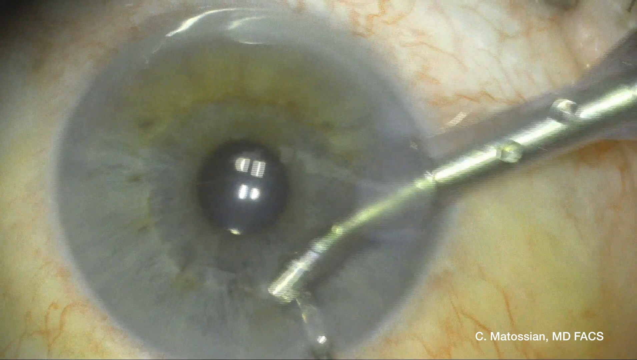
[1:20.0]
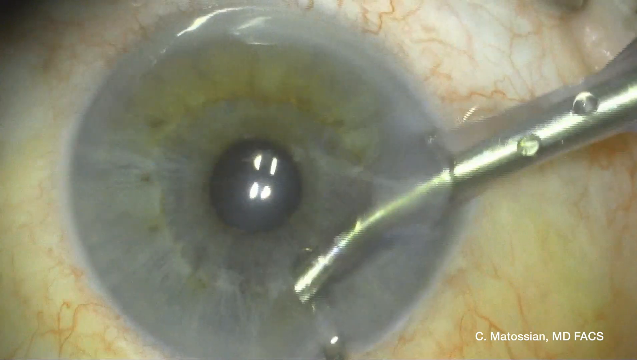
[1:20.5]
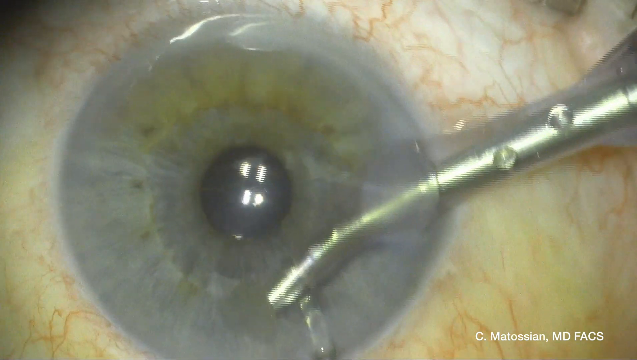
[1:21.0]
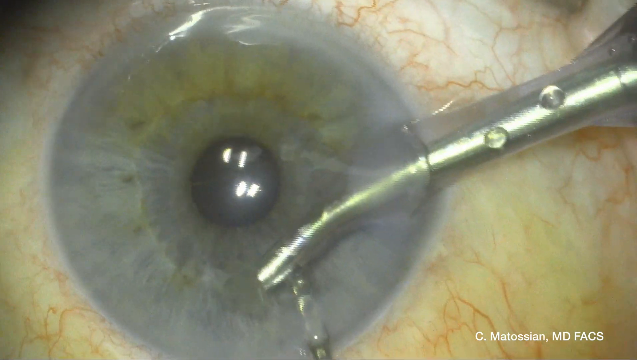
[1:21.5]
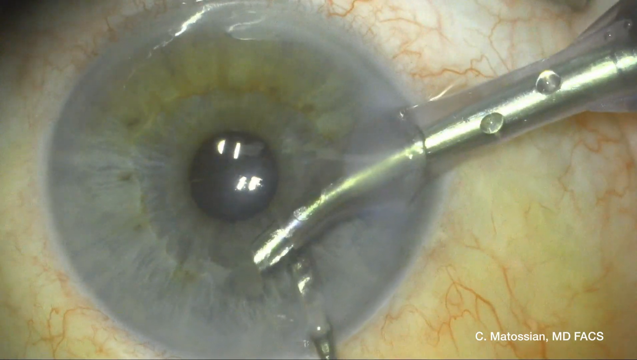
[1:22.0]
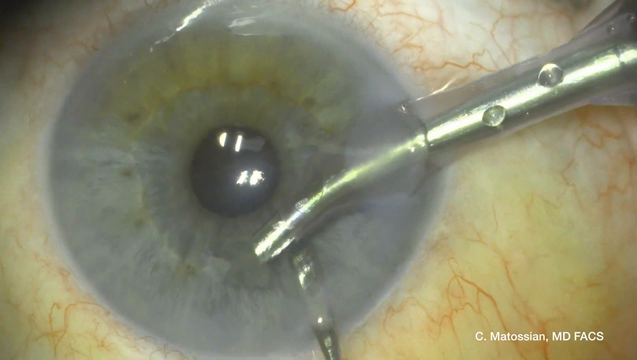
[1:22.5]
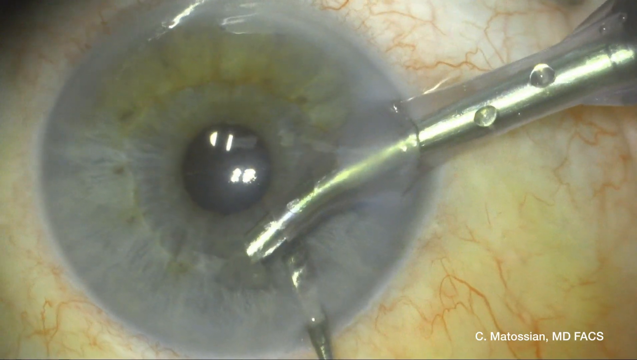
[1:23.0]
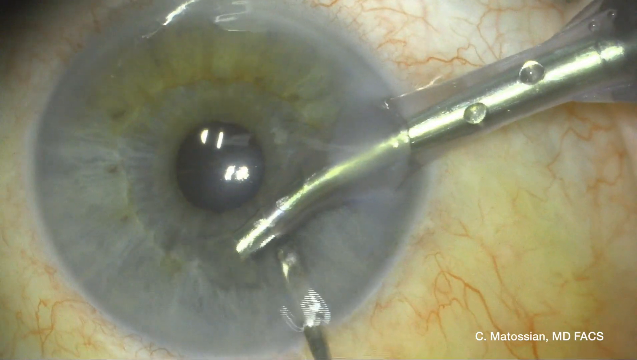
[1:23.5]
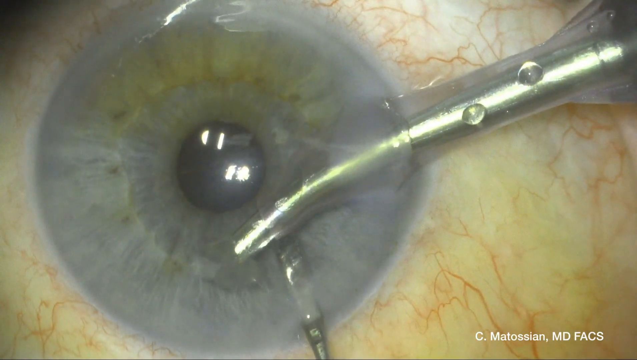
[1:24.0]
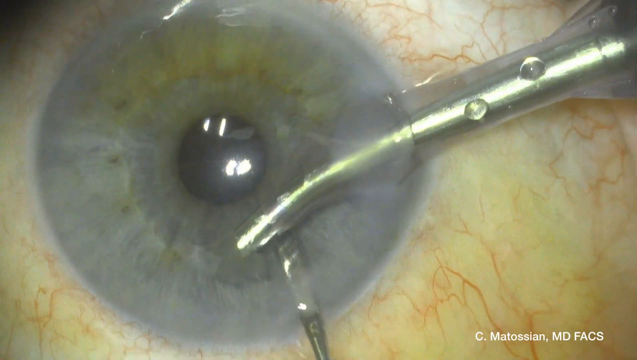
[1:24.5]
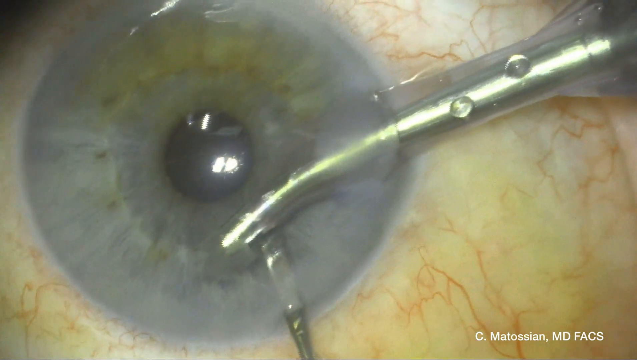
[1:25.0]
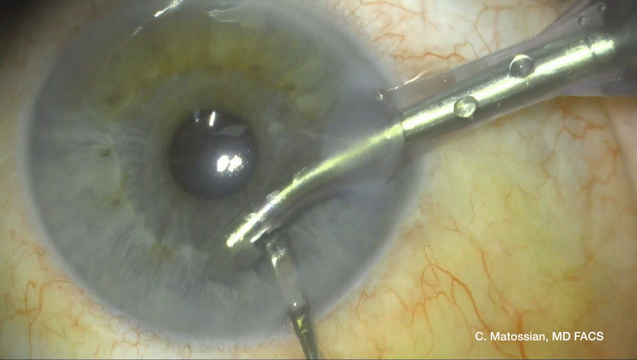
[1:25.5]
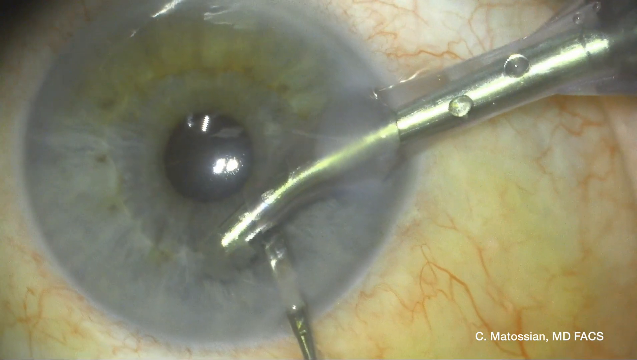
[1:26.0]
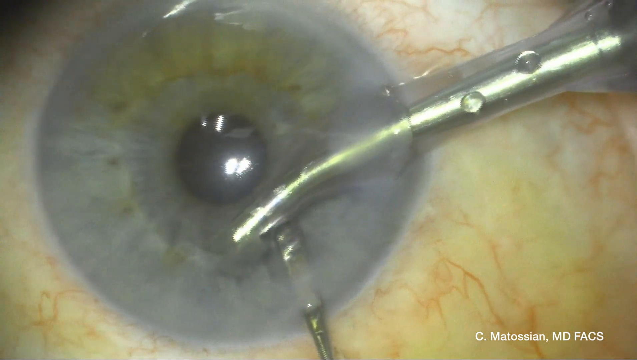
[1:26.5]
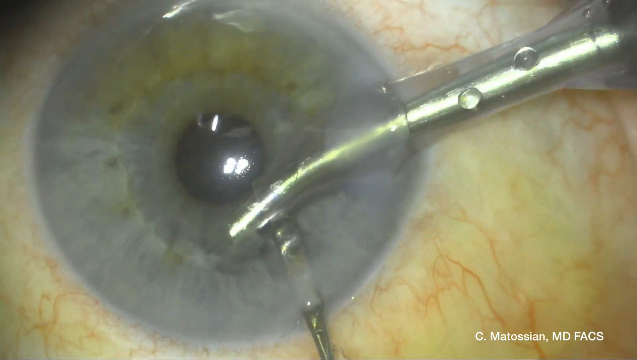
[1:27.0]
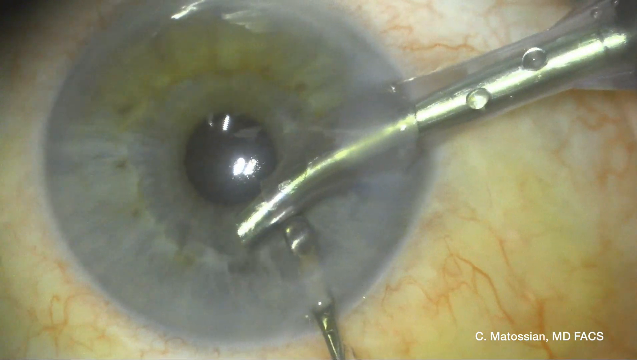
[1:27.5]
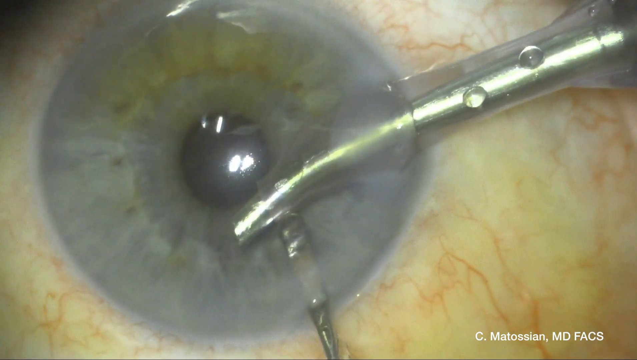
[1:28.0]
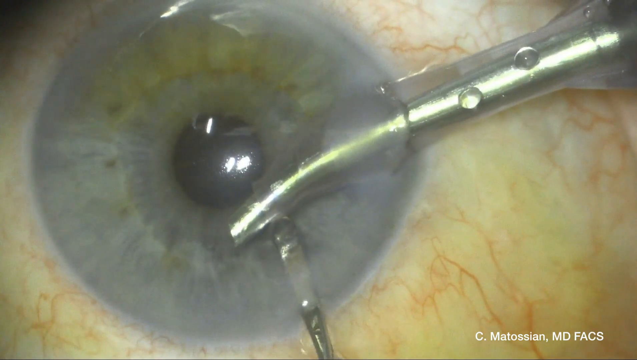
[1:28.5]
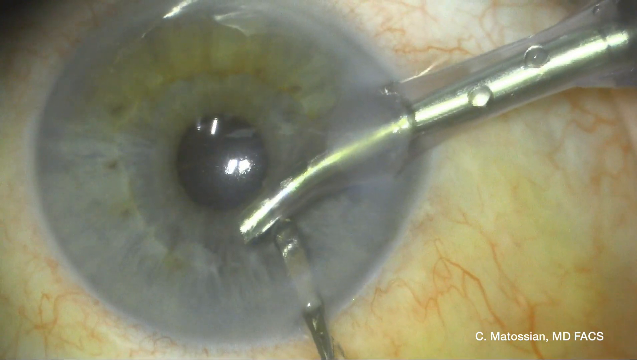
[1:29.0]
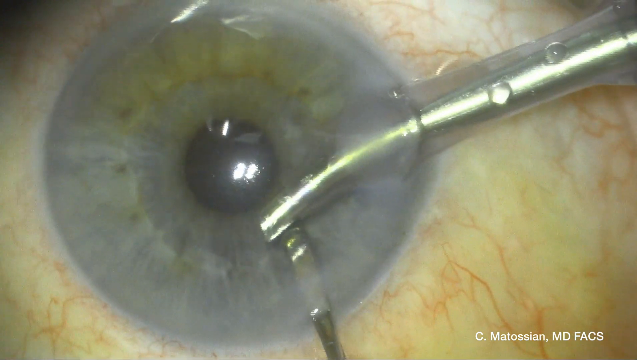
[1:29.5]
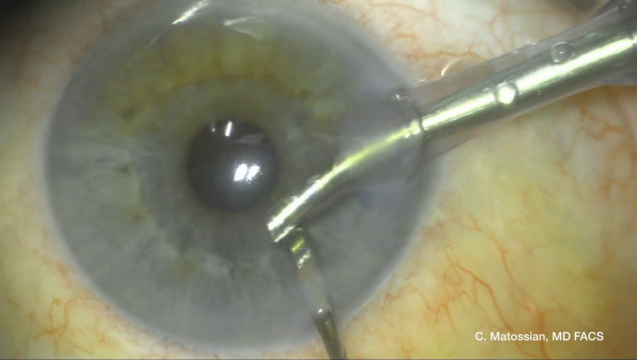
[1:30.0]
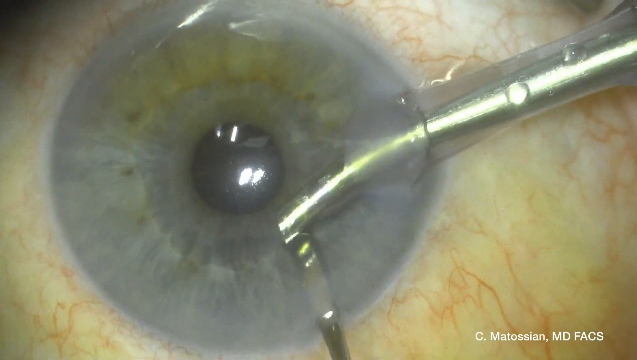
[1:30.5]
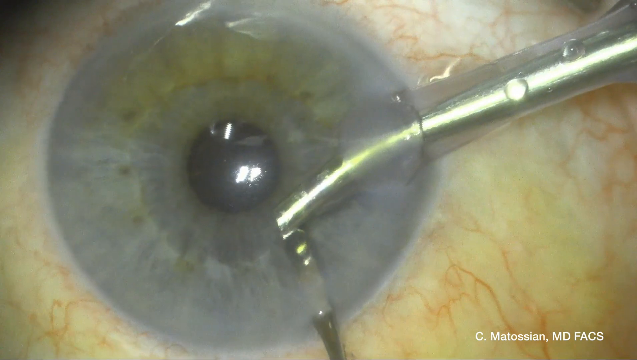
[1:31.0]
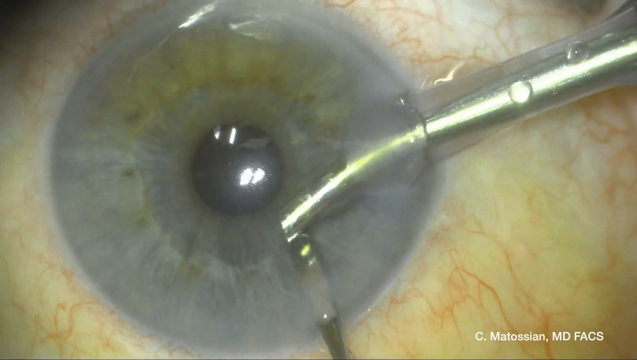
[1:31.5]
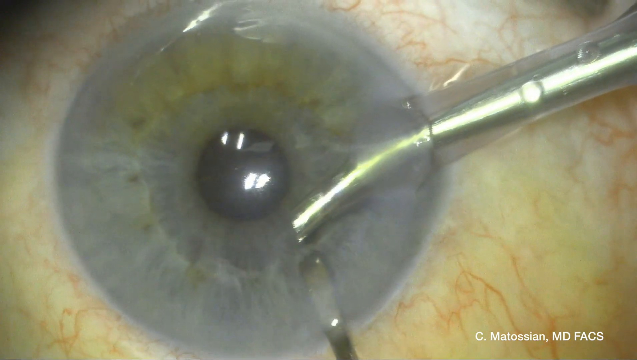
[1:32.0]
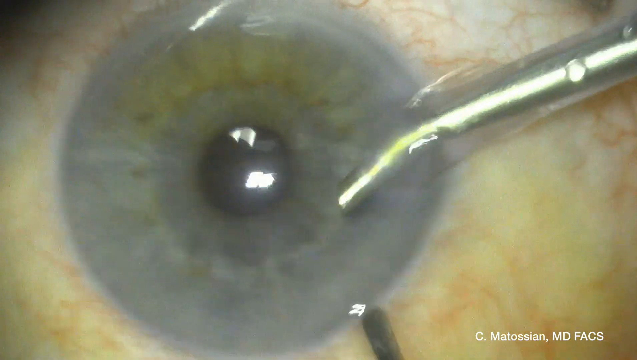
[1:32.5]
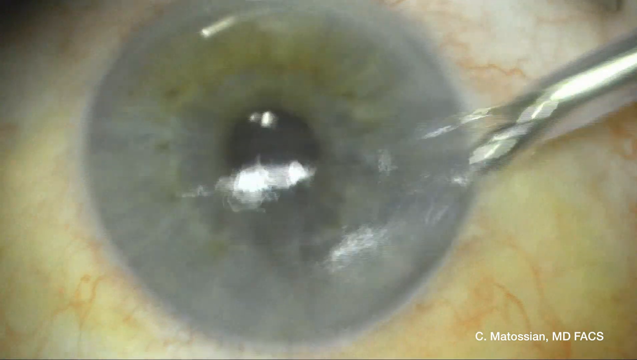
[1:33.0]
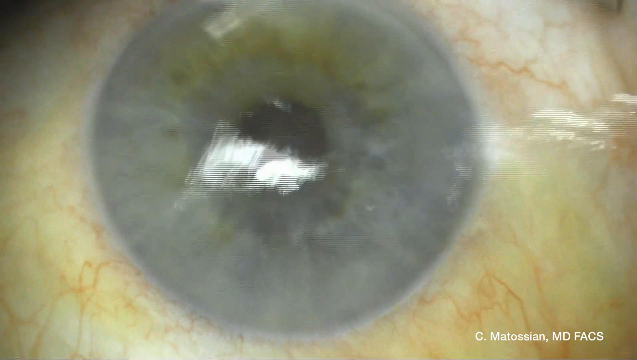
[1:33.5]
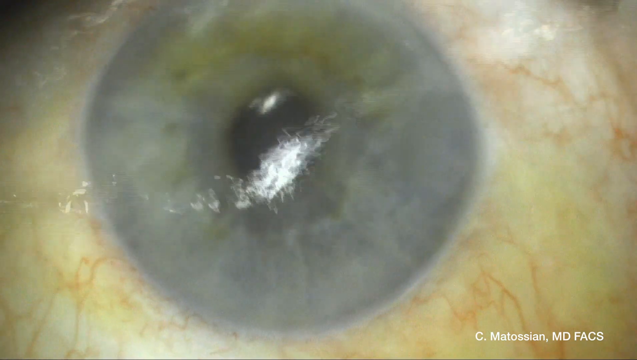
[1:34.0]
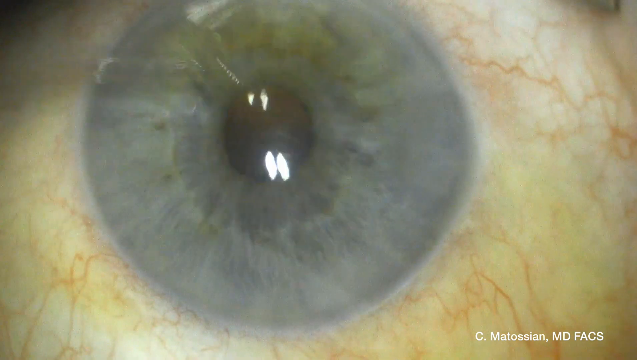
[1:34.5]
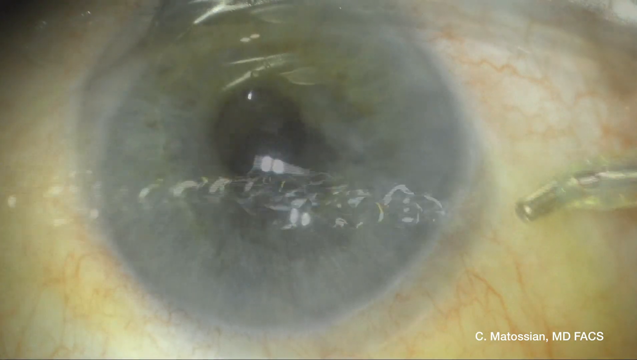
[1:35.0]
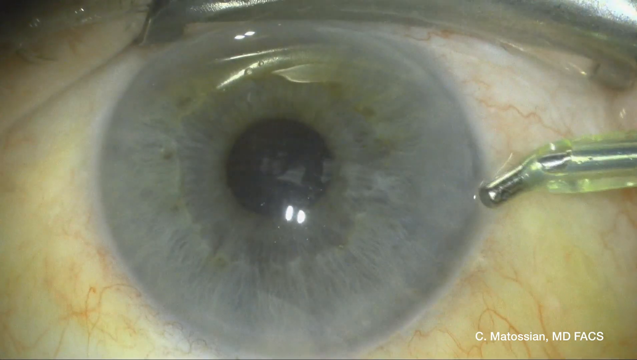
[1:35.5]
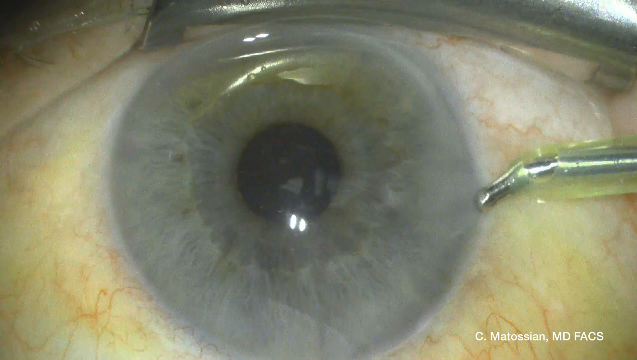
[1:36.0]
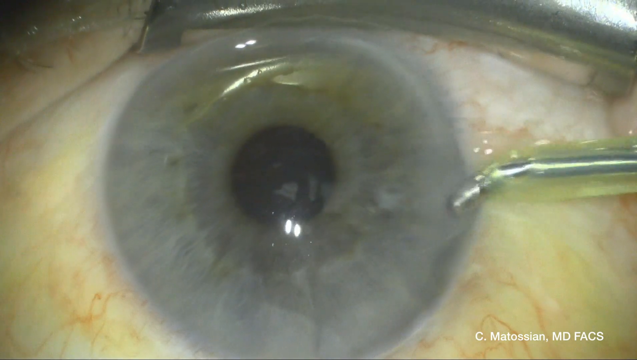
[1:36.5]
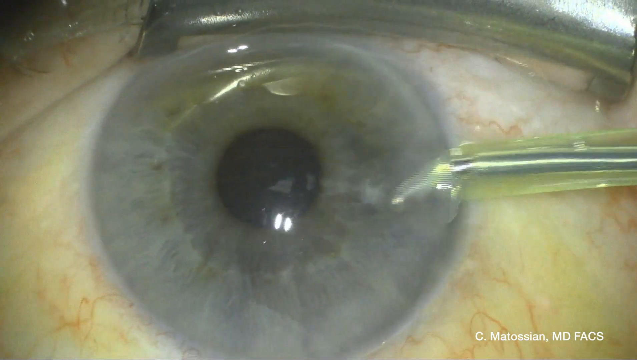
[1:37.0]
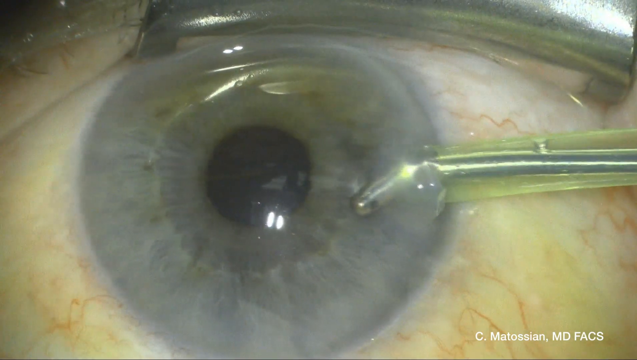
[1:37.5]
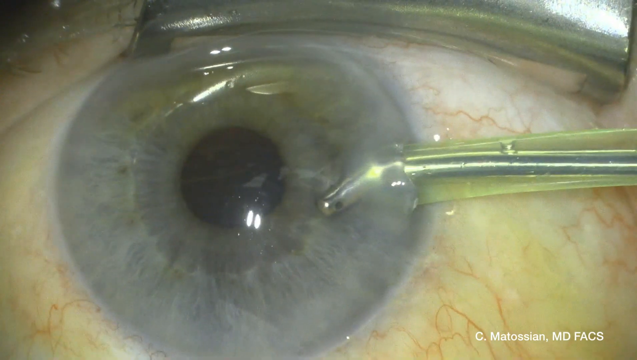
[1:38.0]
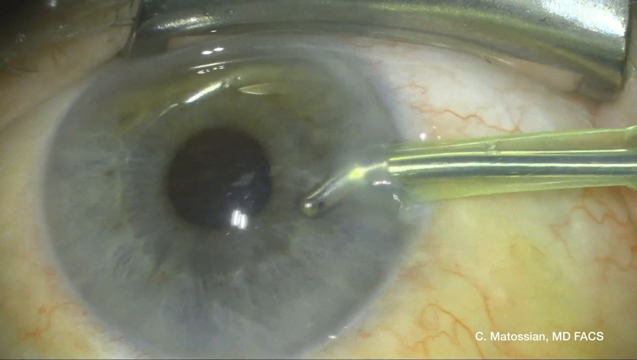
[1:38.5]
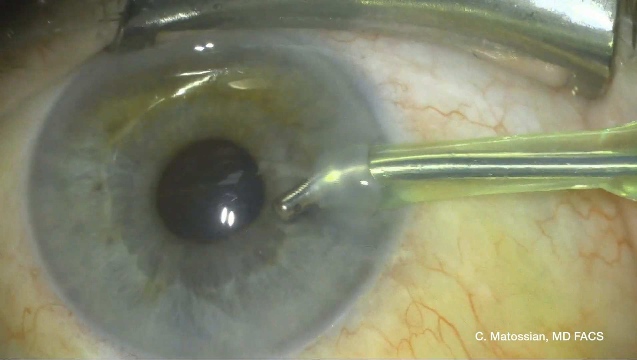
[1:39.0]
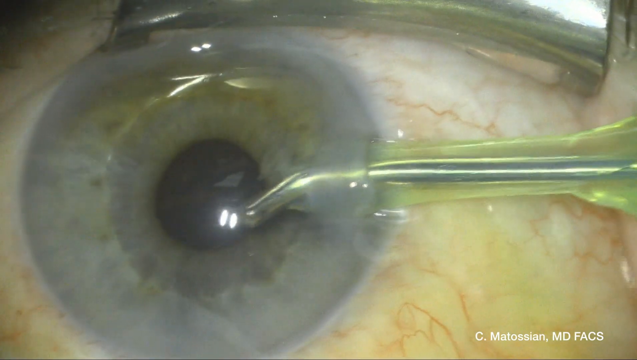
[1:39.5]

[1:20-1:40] A close-up shows an eye being operated on. The iris is blue, the pupil black, and the white sclera has many little red veins running through it. The inner part of the eyelid is visible in the upper right corner. A long metallic tube comes out of the upper right corner; it has been pushed to stretch across the white part of the eye, slip under the blue part and press out through the blue part, directly below and to the right of the black pupil. The tube is pressed up and down and up as water is squirted through the eye. The tube is pressed over the metal piece at the bottom of the frame. Water is visibly squirted from the bottom as the tube is finally pulled out to the right and the pointed metal piece is pulled out from the bottom. The tube sprays water to the left side of the eye. As both objects are pulled out, water is sprayed from the left side onto the eye in a counterclockwise manner. The view shifts to show a metal piece on the upper part of the eyelid. To the right, a smaller tube-shaped metallic piece with a yellow covering presses toward the middle of the eye and is then inserted under the eye.